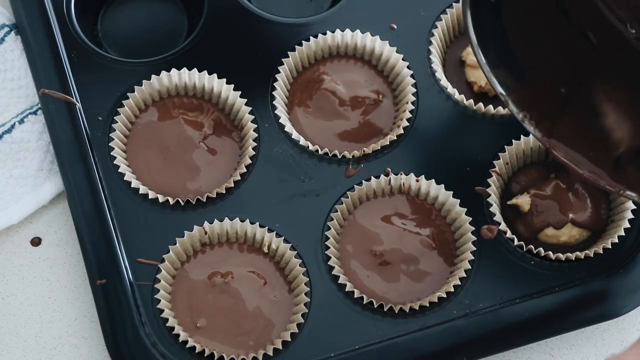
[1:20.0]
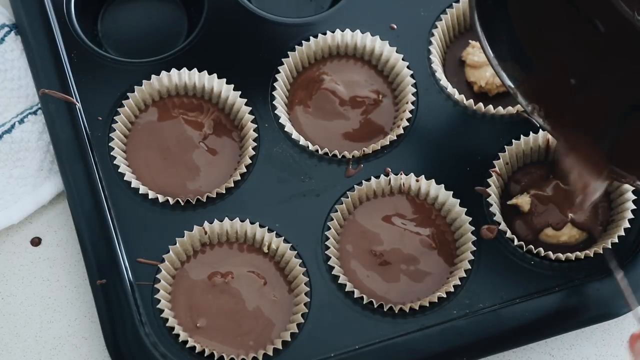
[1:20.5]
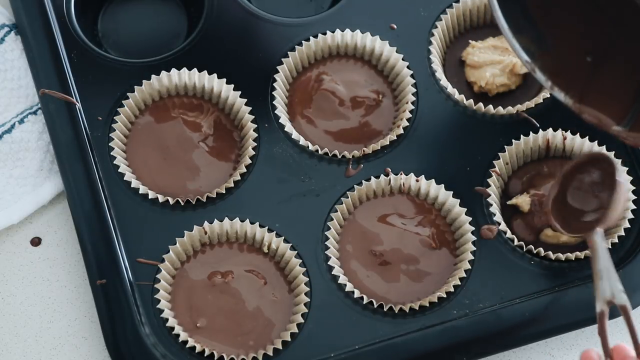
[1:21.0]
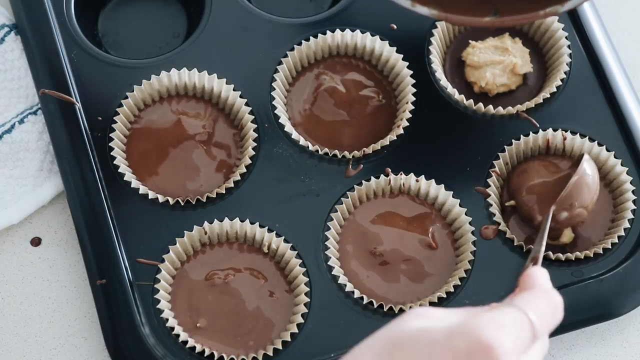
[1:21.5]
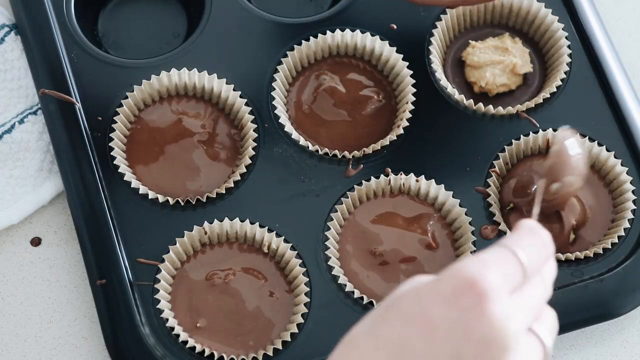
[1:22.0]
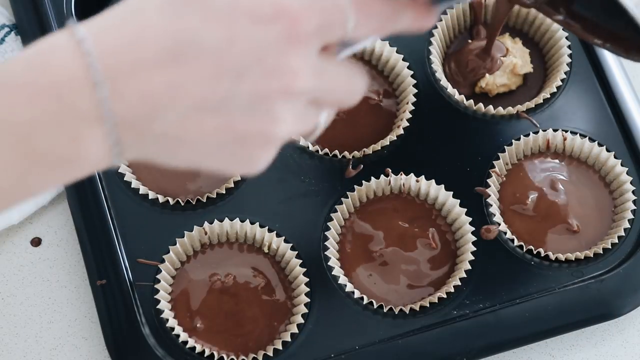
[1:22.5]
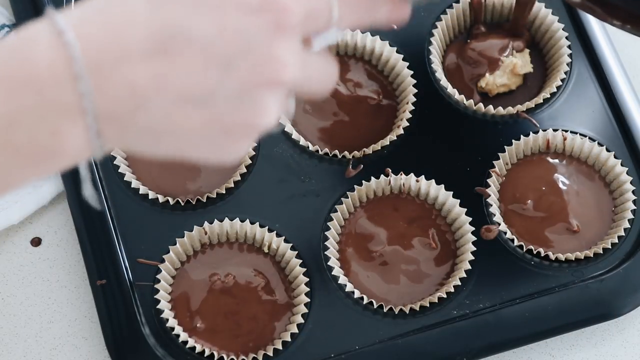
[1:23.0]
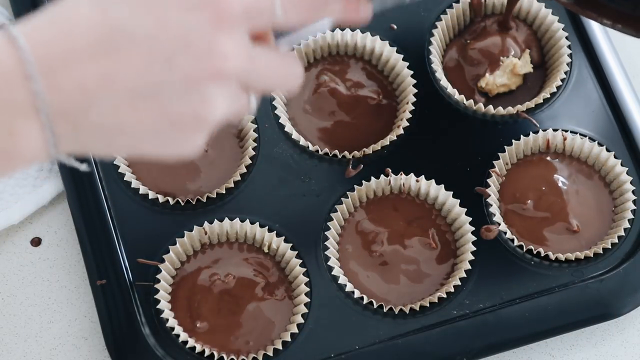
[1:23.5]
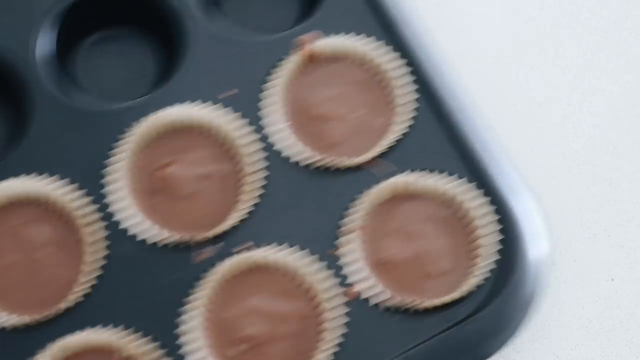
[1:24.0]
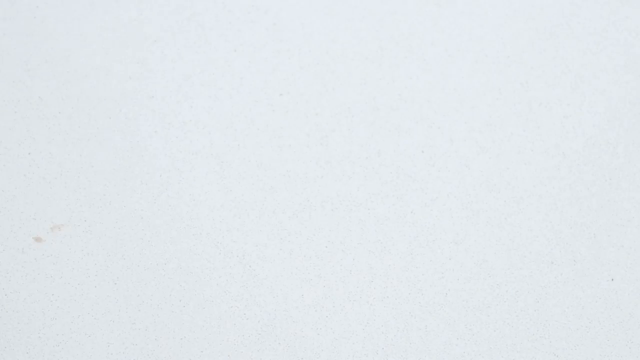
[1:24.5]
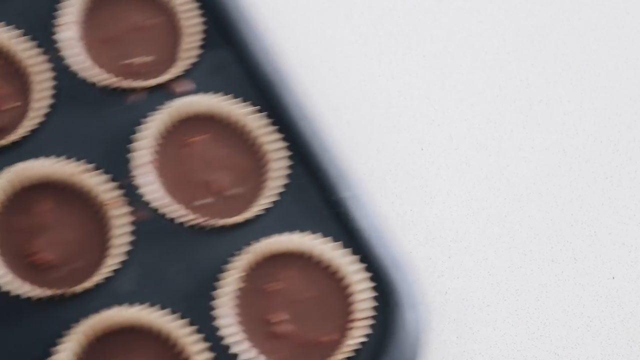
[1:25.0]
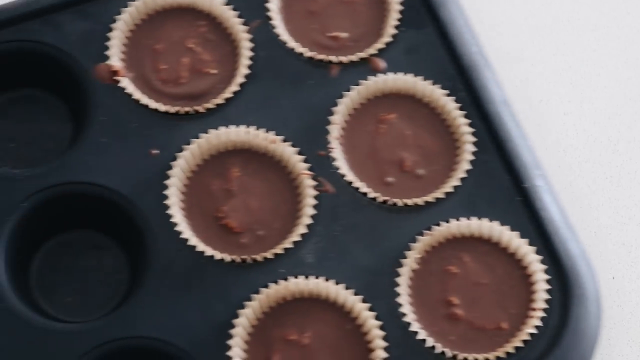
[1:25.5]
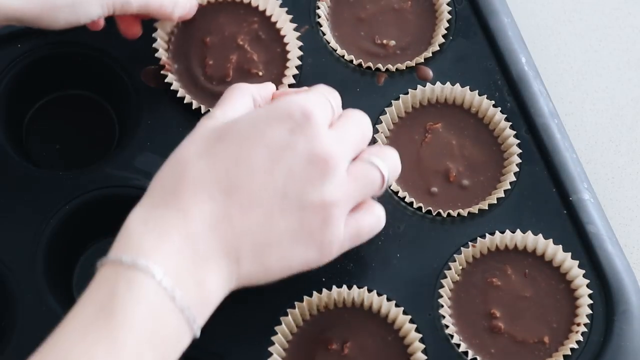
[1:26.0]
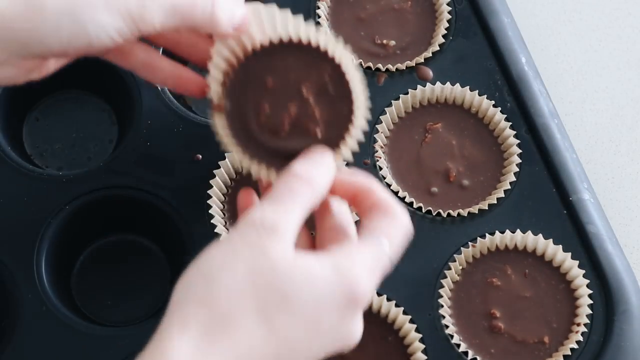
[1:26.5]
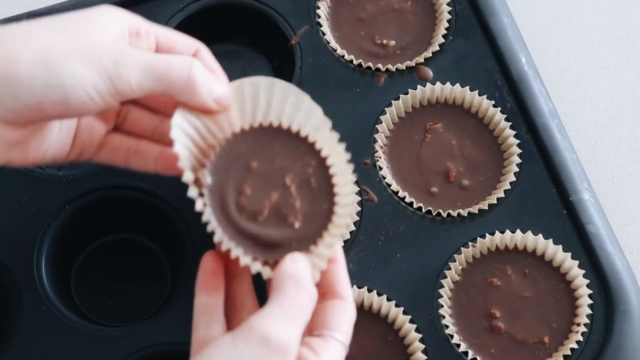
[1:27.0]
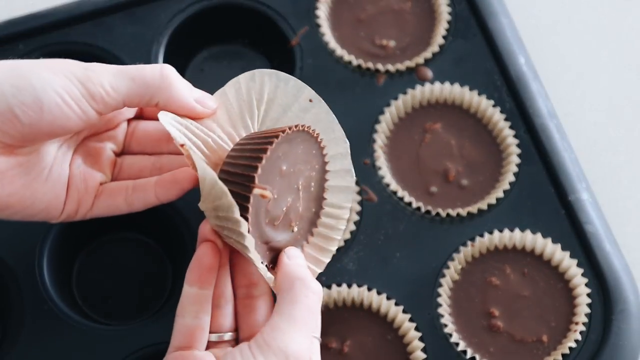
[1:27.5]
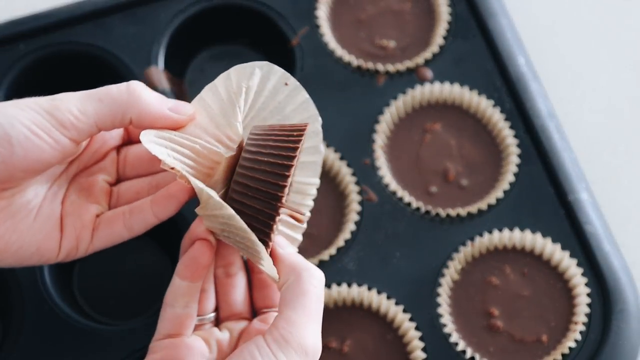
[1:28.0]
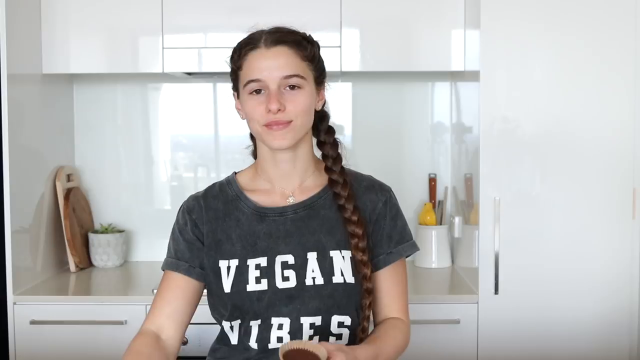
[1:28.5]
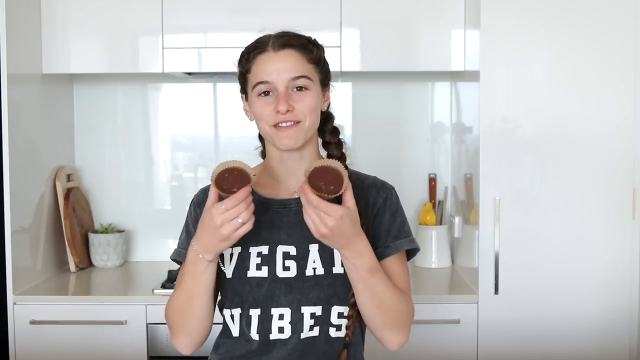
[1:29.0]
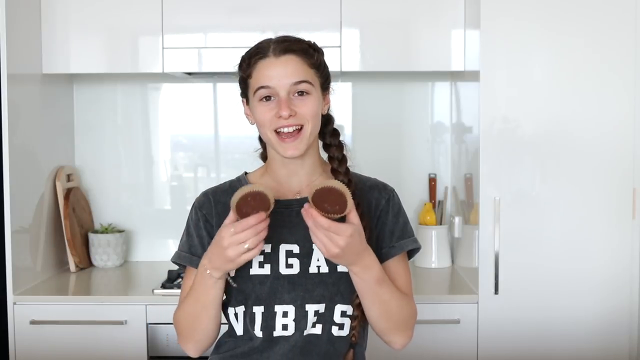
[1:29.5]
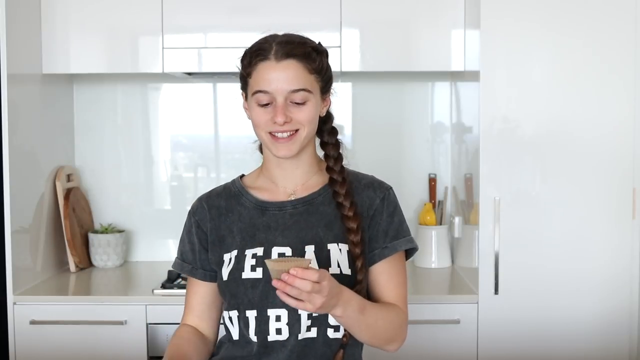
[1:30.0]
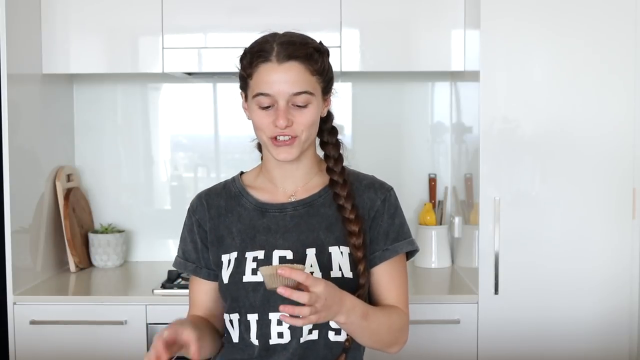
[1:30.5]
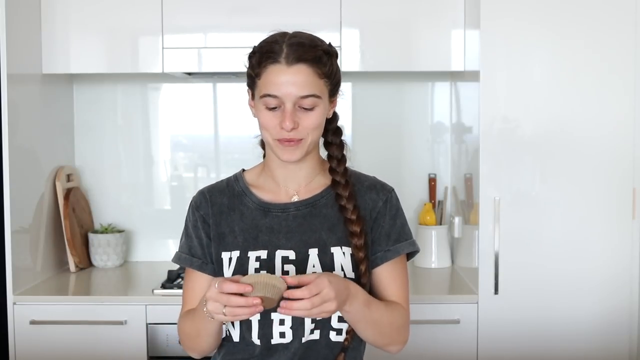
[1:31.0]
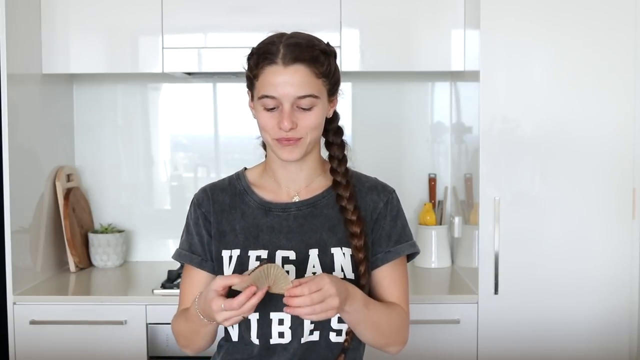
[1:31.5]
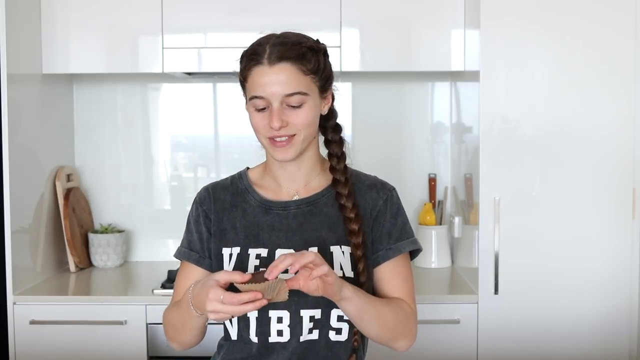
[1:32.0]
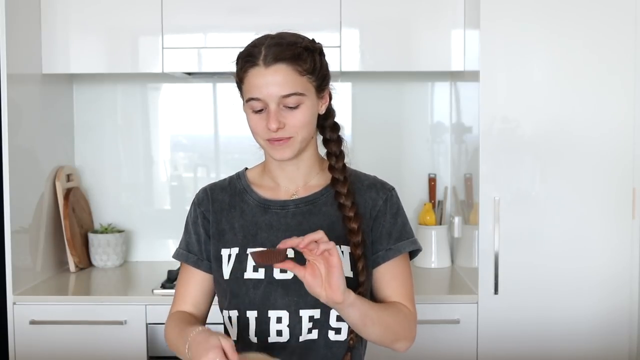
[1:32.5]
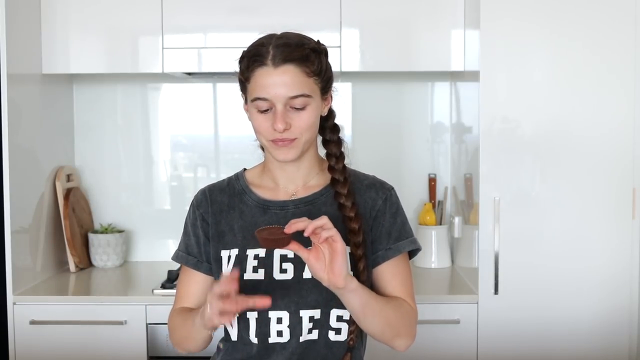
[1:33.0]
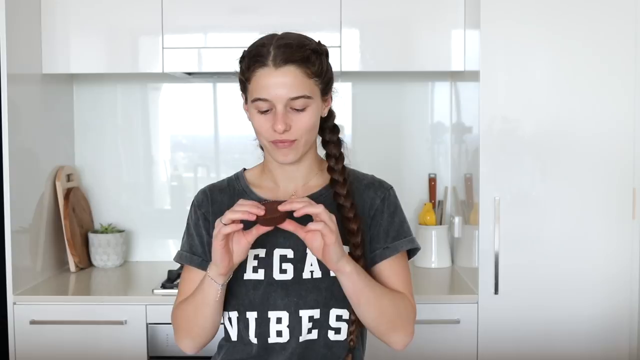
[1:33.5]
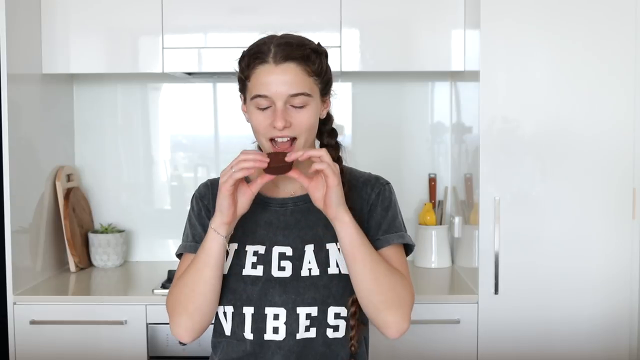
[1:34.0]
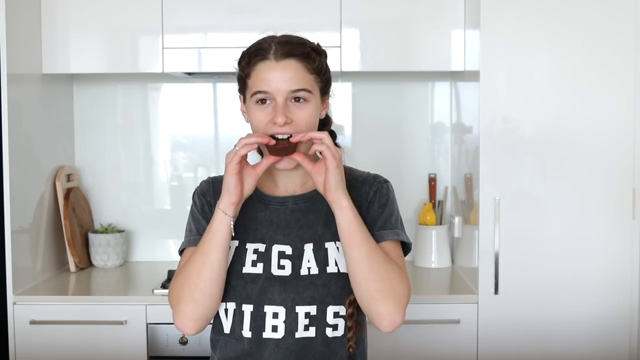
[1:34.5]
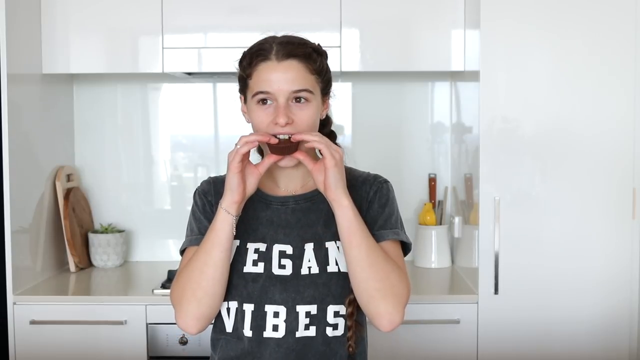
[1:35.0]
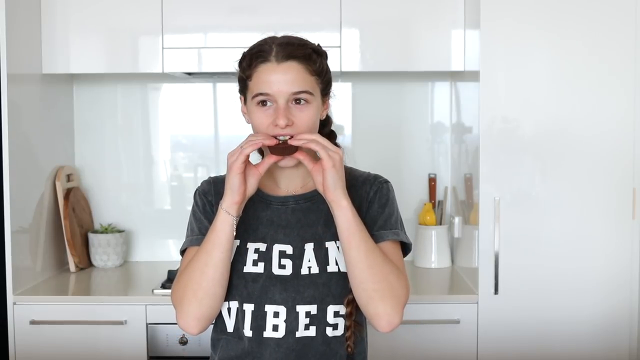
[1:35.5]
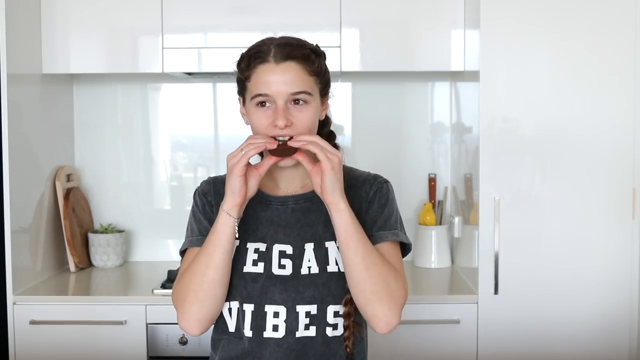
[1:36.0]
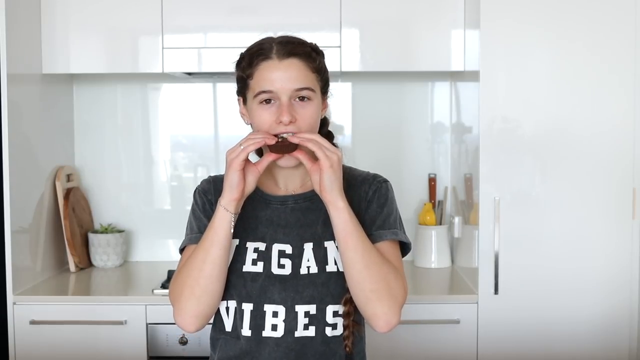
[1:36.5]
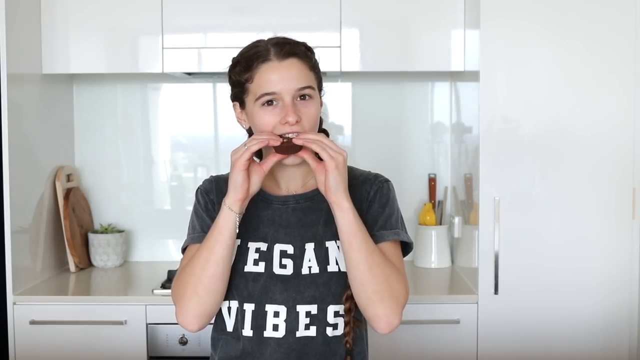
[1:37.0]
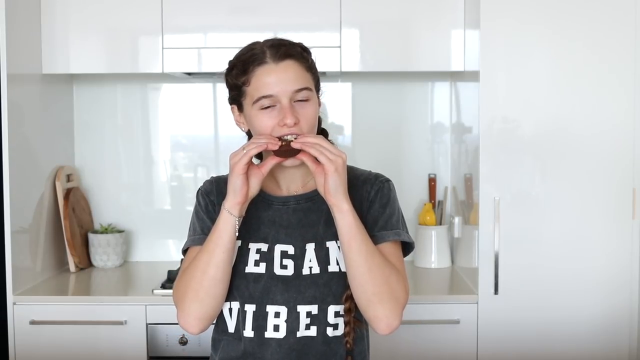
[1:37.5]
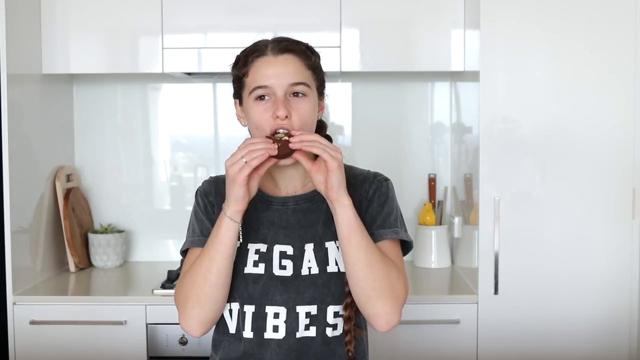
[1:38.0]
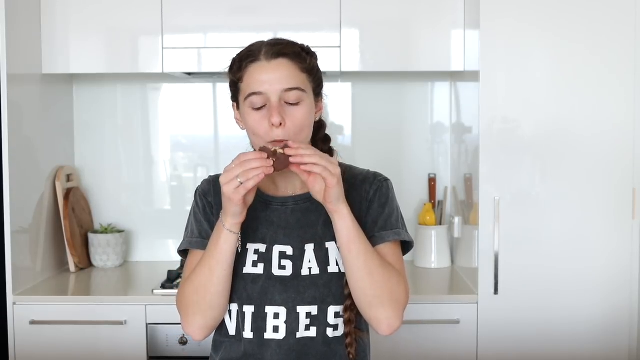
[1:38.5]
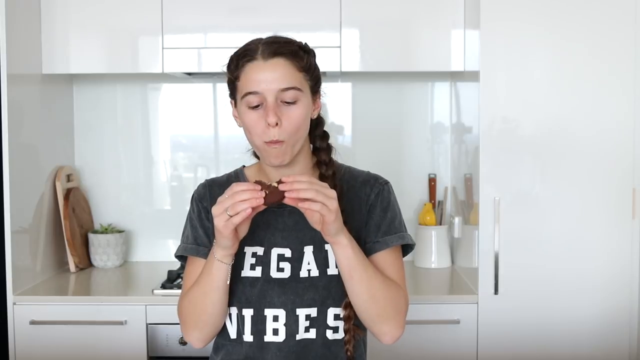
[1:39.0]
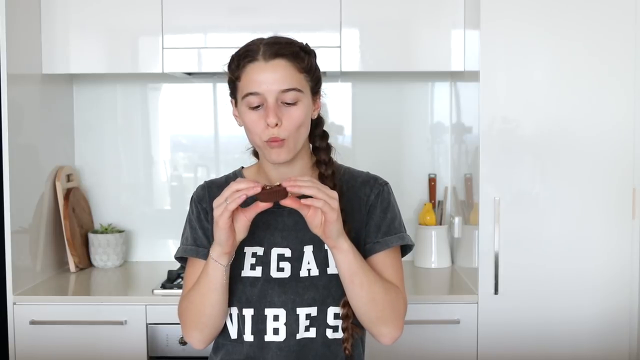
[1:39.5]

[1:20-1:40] A cupcake pan has six slots filled with cupcake wrappers holding melted chocolate with peanut butter placed in the center. The last of the chocolate is poured over the top so the top is even and the peanut butter cannot be seen. The pan is removed to cook the candies and returned in time-lapse. The white female's hands pick up one of the cooled peanut butter cup candies and start removing its cupcake wrapper. The scene changes to her looking into the camera, wearing her gray t-shirt that says "vegan vibes" in white bold letters. She is an older white female teenager with very long straight black hair that reaches her stomach in a braid. She holds two of the candies in their wrappers in front of her, sets one down, unwraps the other, and takes a bite. Holding the candy with the fingers of both hands, she bites into the chocolate and looks at it as she chews and speaks about what she has made.